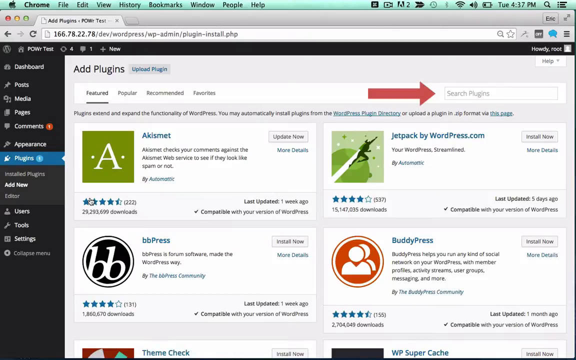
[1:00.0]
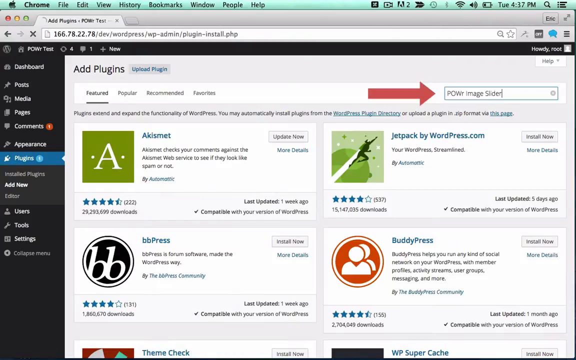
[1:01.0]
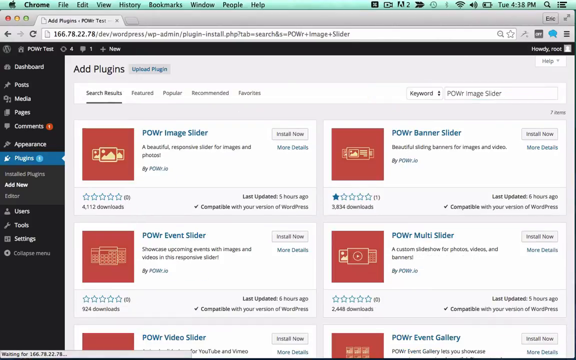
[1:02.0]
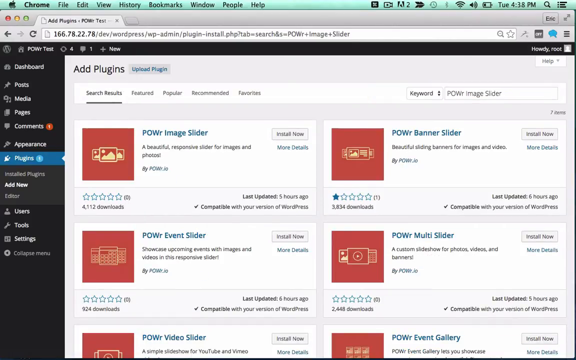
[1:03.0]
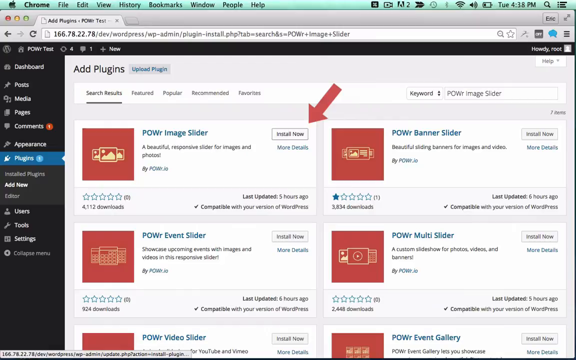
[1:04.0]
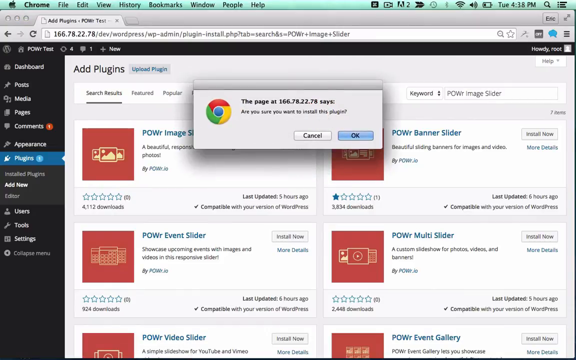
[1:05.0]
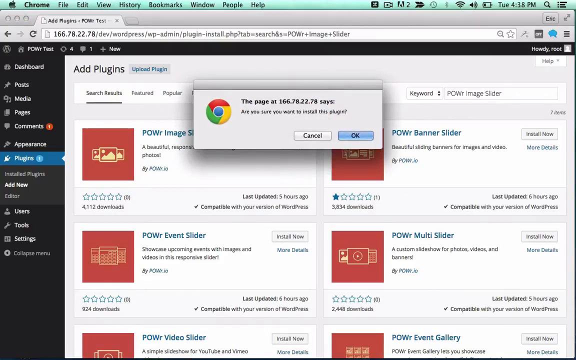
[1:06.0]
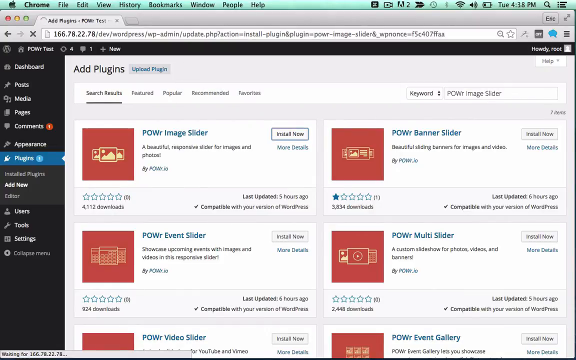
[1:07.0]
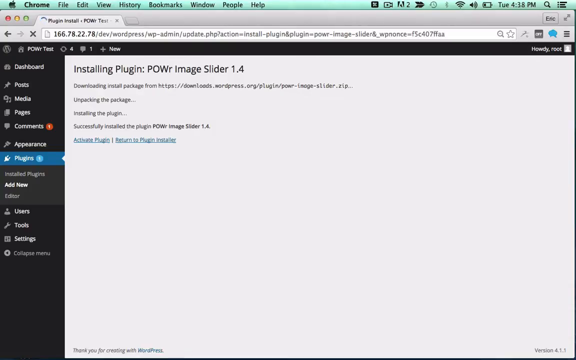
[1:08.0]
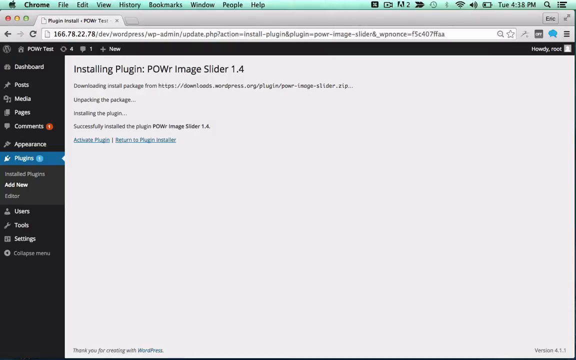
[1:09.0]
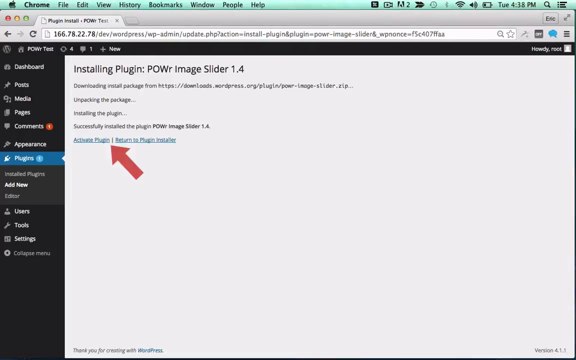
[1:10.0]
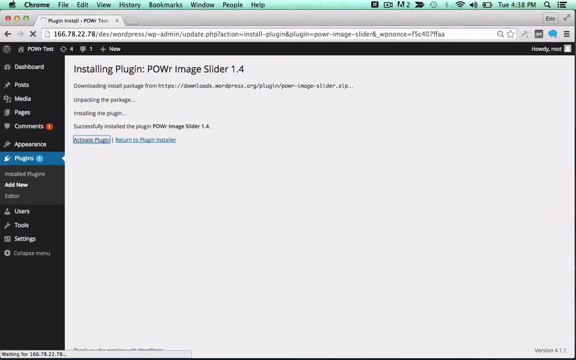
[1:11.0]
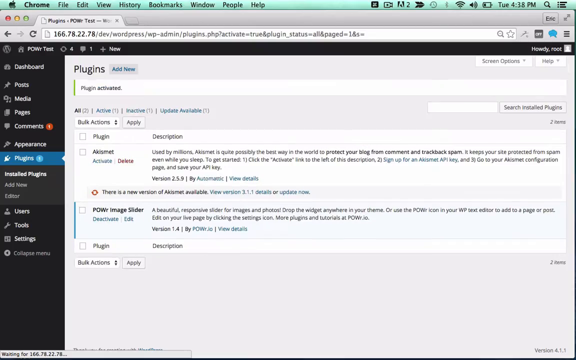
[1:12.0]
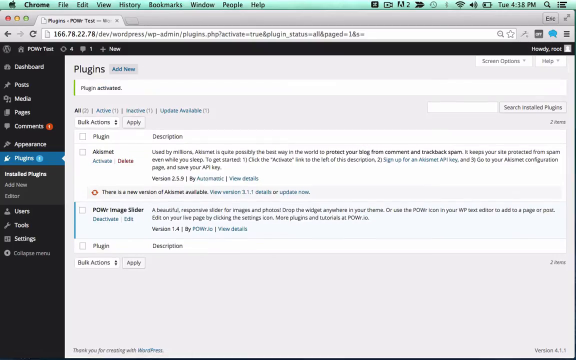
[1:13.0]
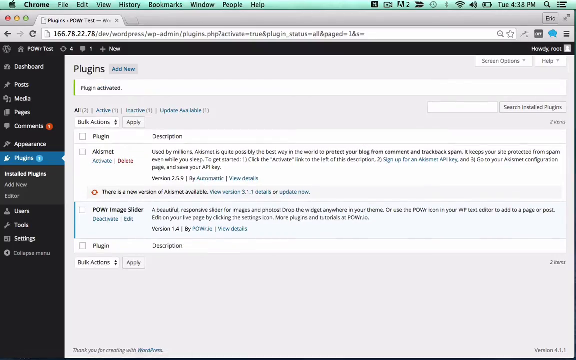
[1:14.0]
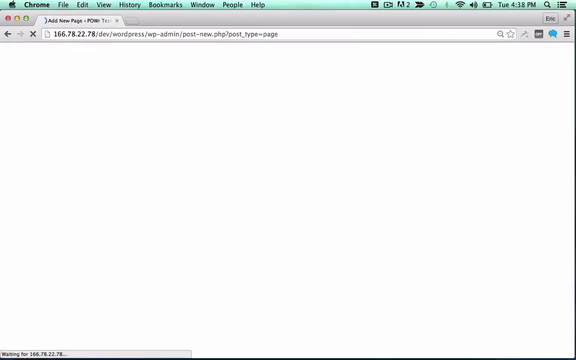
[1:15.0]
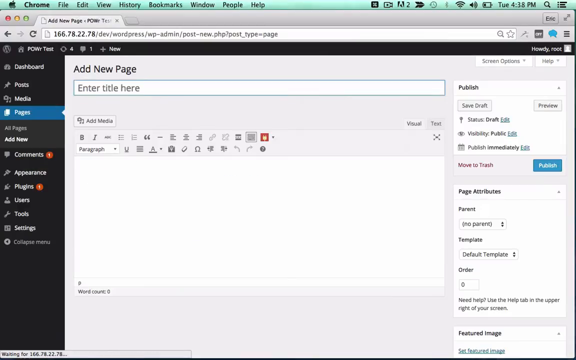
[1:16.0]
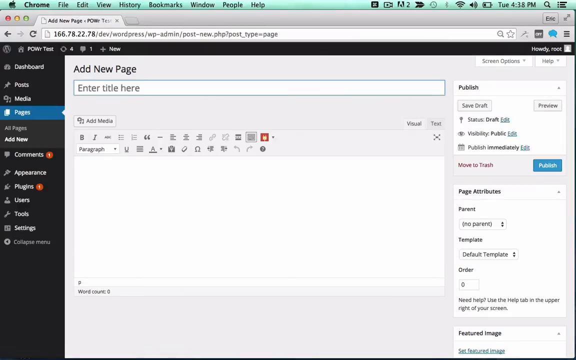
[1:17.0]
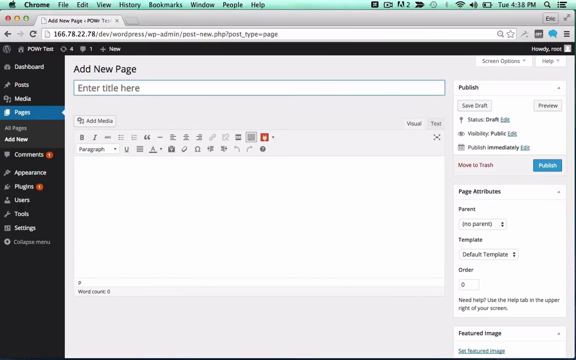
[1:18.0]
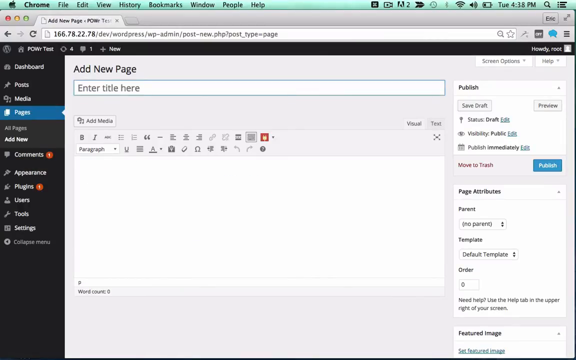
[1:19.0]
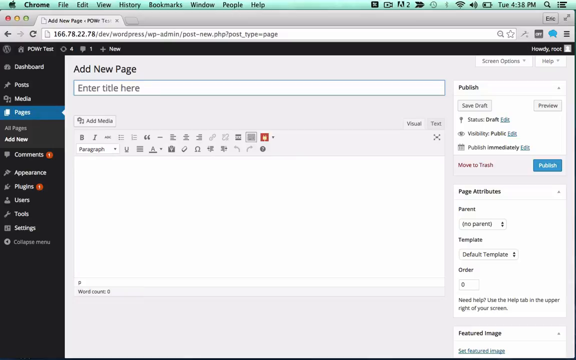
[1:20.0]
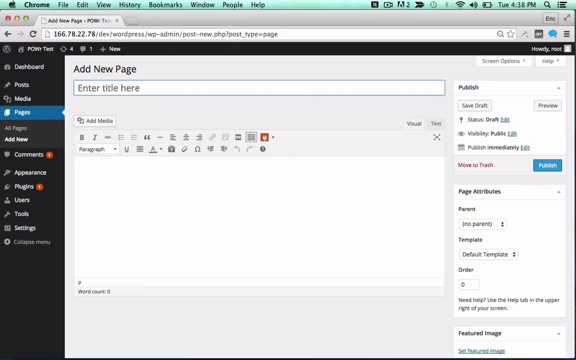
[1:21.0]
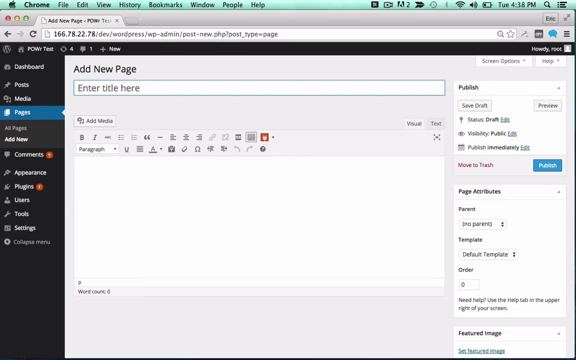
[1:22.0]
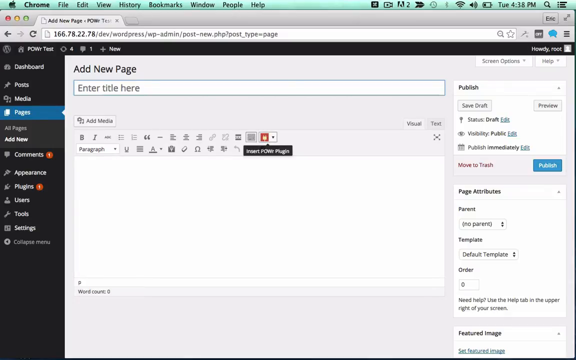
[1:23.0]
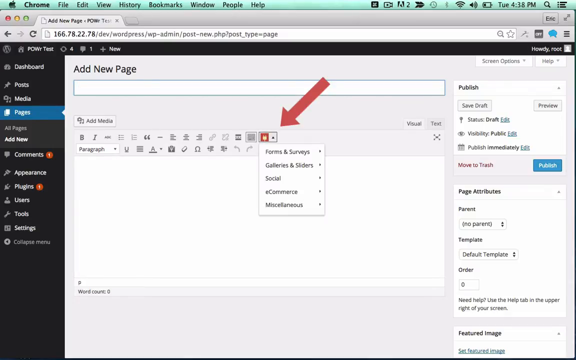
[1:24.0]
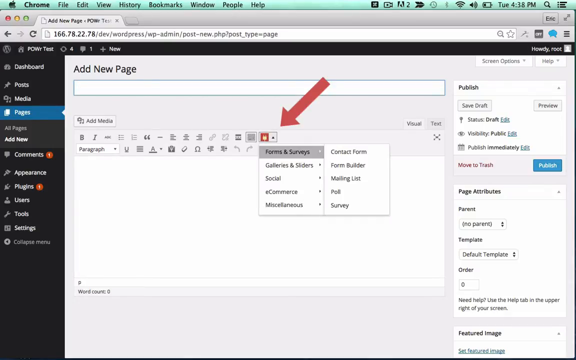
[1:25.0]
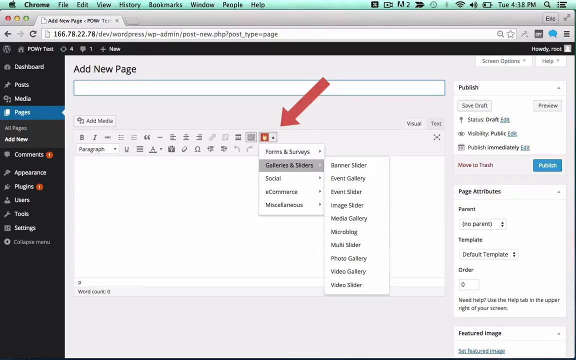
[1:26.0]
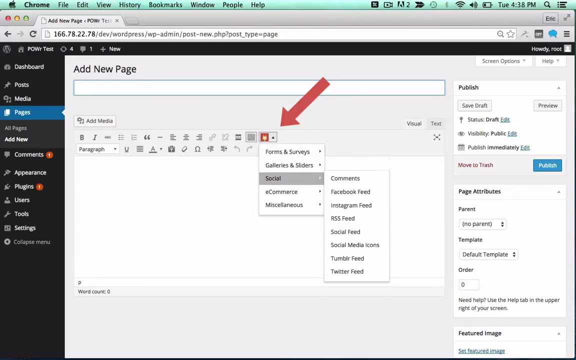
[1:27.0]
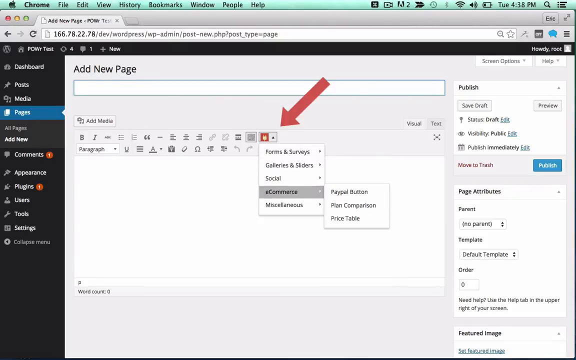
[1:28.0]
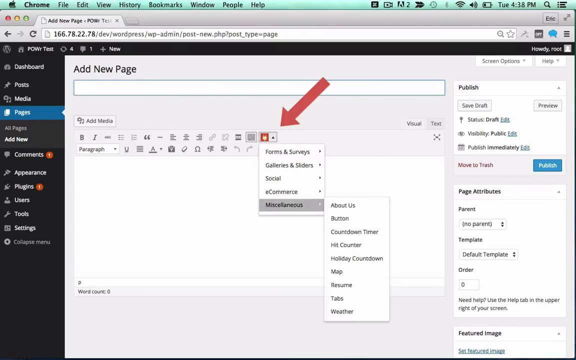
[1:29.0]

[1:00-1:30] Under plugins, he searches "power image slider", and four results appear, all starting with power. The first one, in the top left, has an install now button, which he clicks. A Chrome browser pop-up asks "are you sure you want to install this plugin", and he clicks OK. Back on the plugins page, it reads "installing plug-in power image slider 1.4", and he clicks the activate plug-in button. This leads to a list of two plugins, with power image slider highlighted. He then clicks something that opens a new page reading "add new page" with "enter title here", and hovers over the title bar. Next to the formatting buttons is a red "insert power plug-in" button with a red arrow pointing to it. He clicks it, all the menus are shown, and he goes to miscellaneous.